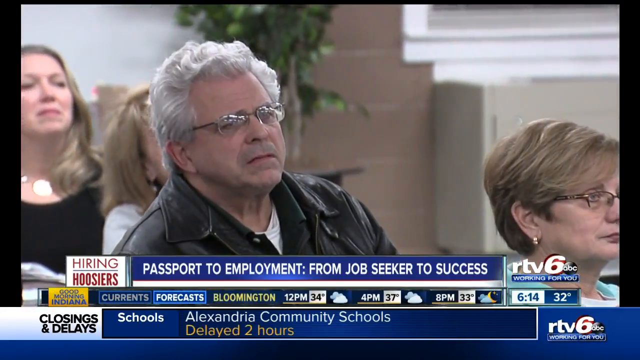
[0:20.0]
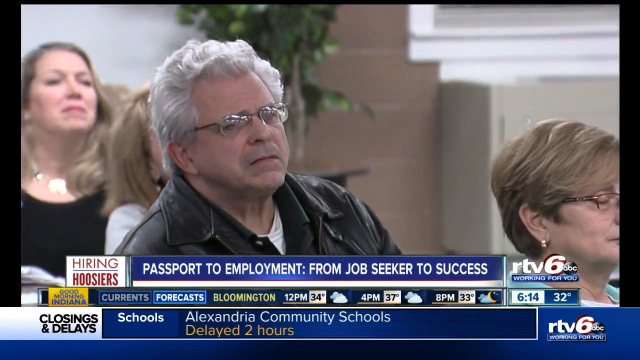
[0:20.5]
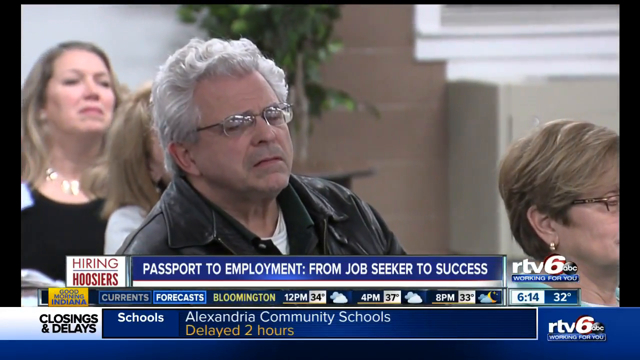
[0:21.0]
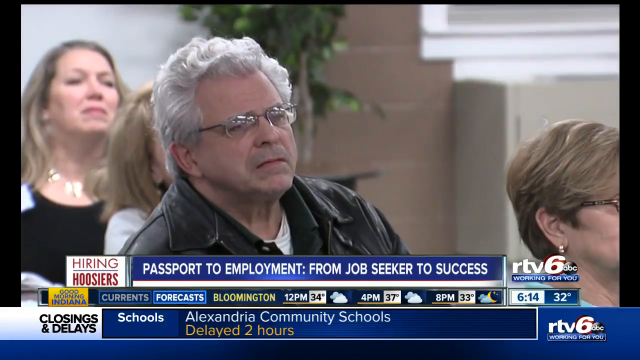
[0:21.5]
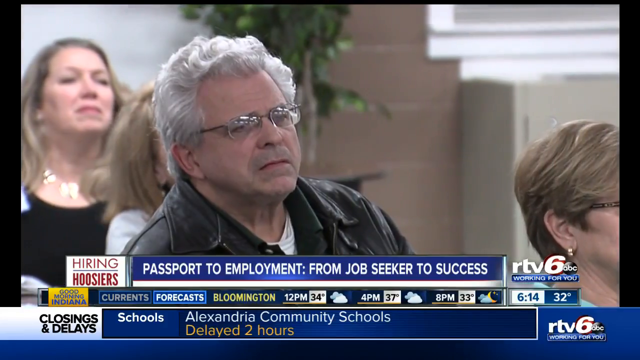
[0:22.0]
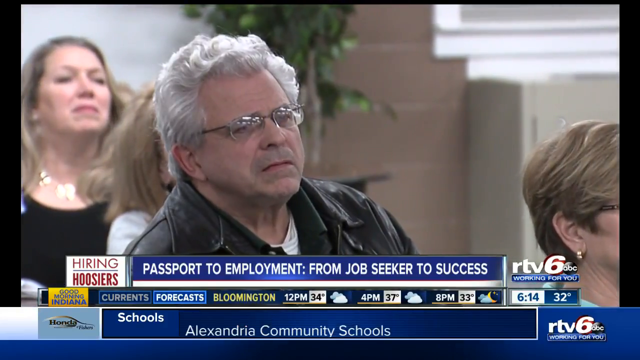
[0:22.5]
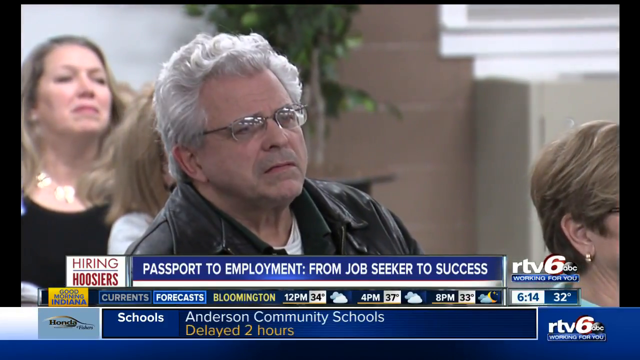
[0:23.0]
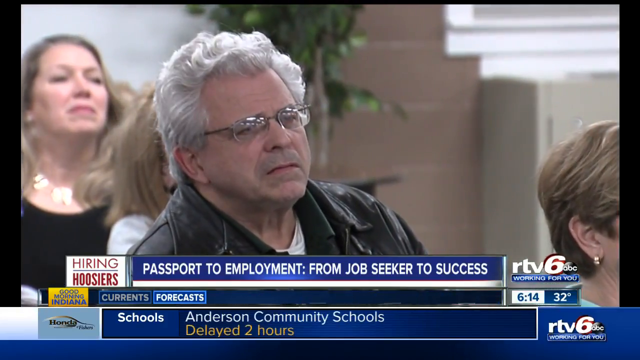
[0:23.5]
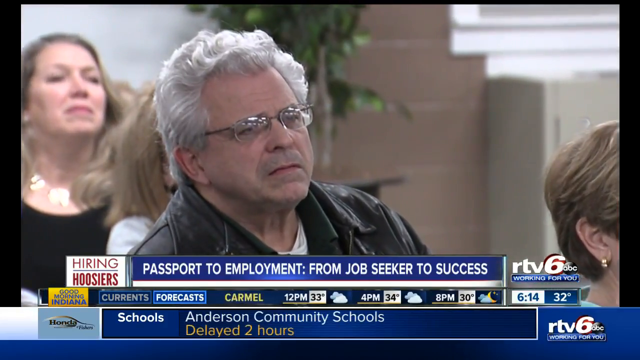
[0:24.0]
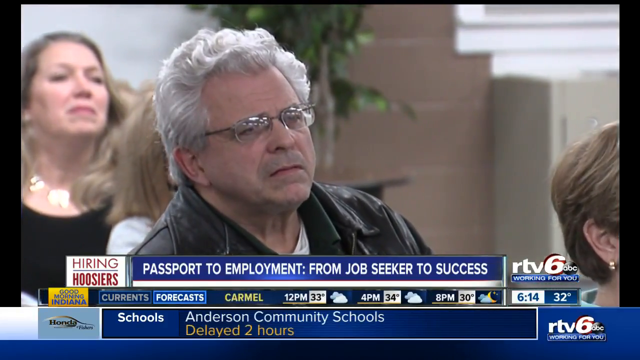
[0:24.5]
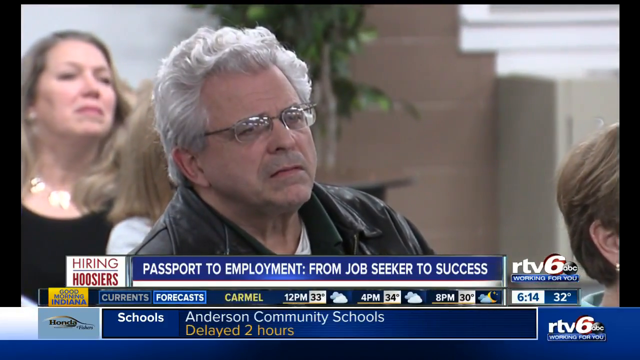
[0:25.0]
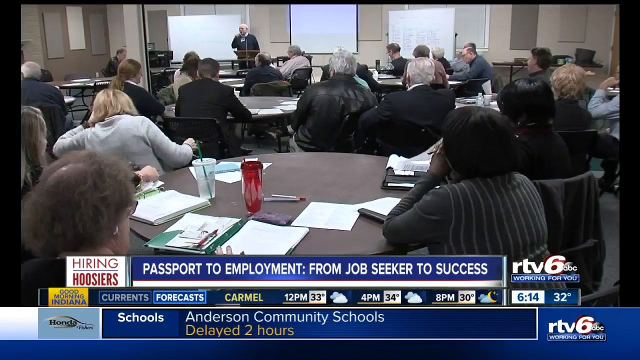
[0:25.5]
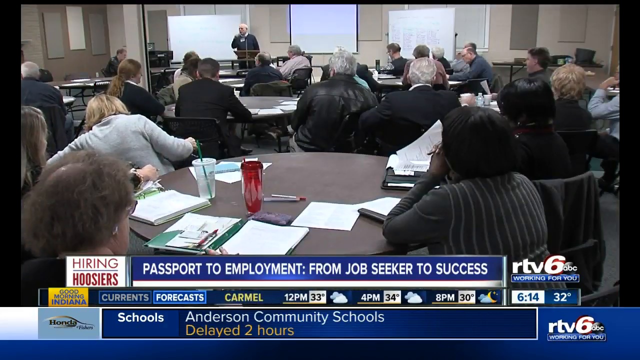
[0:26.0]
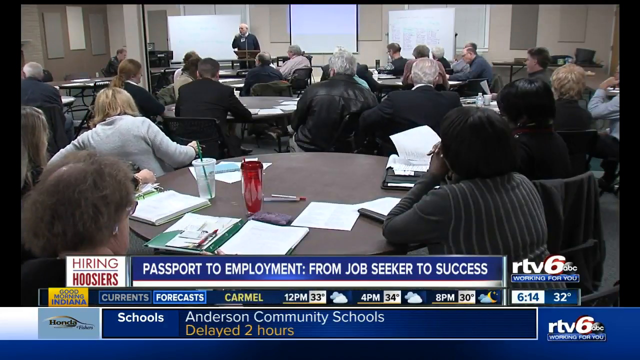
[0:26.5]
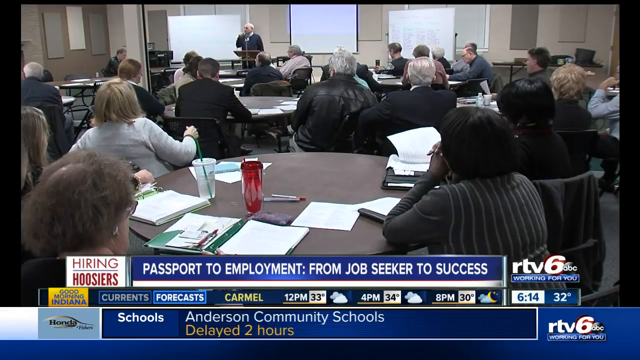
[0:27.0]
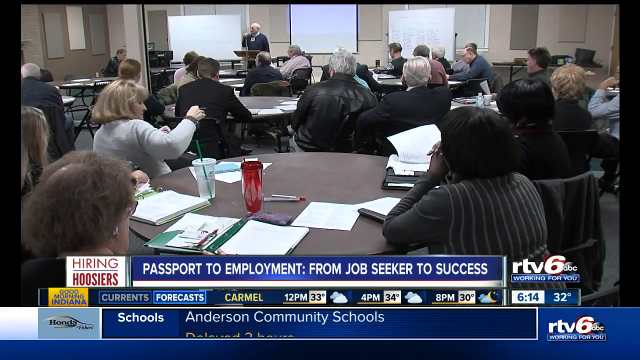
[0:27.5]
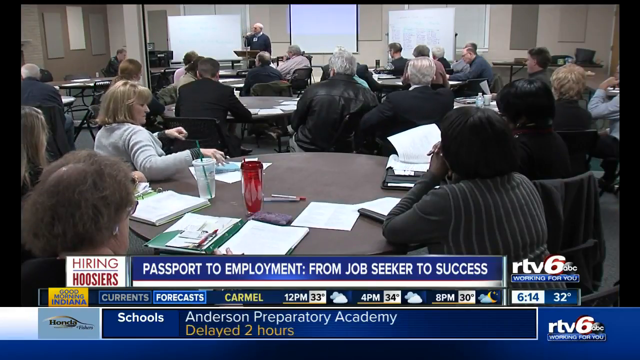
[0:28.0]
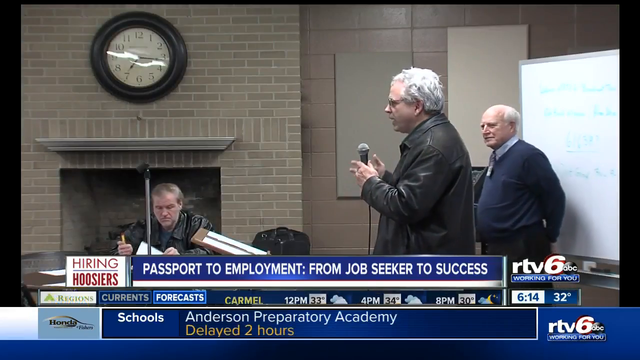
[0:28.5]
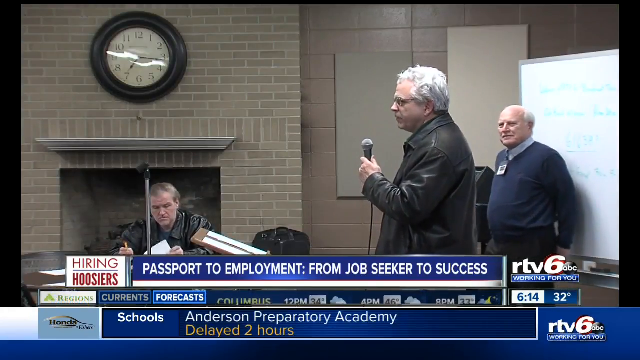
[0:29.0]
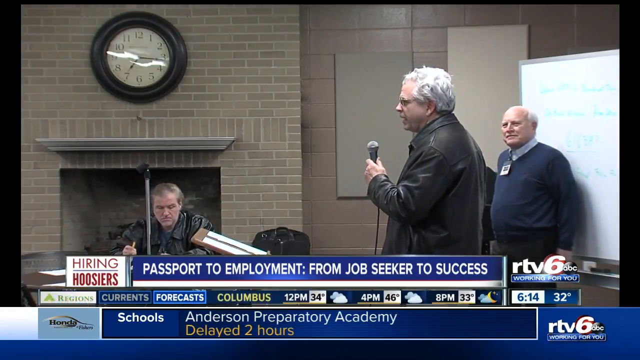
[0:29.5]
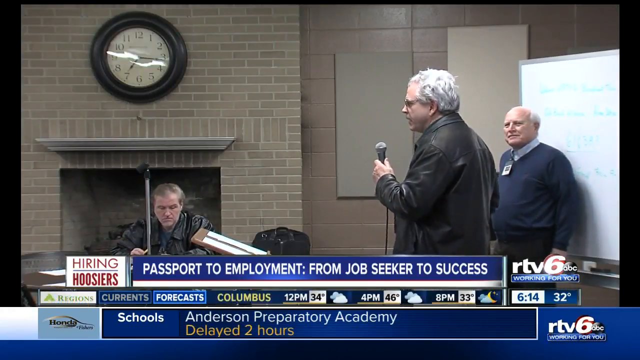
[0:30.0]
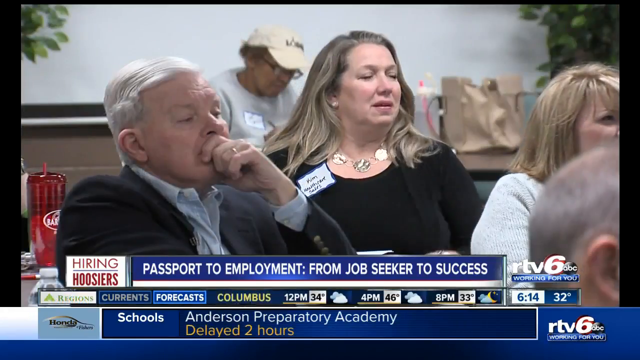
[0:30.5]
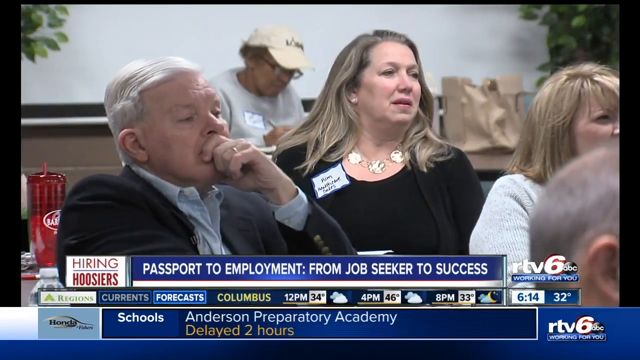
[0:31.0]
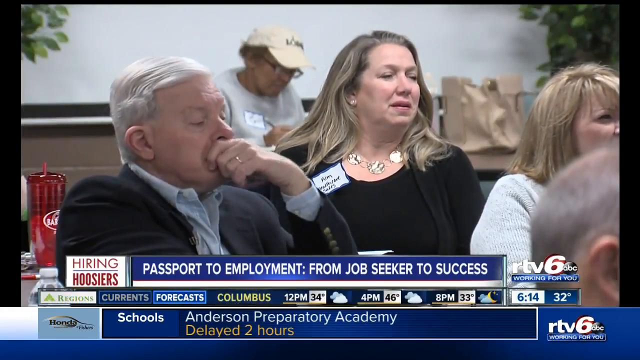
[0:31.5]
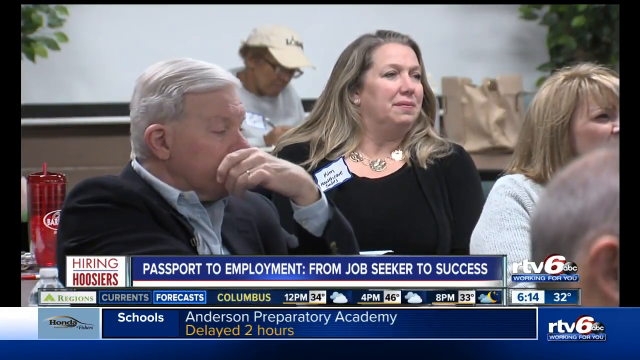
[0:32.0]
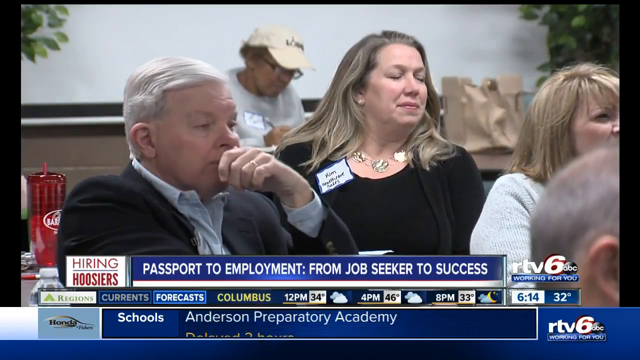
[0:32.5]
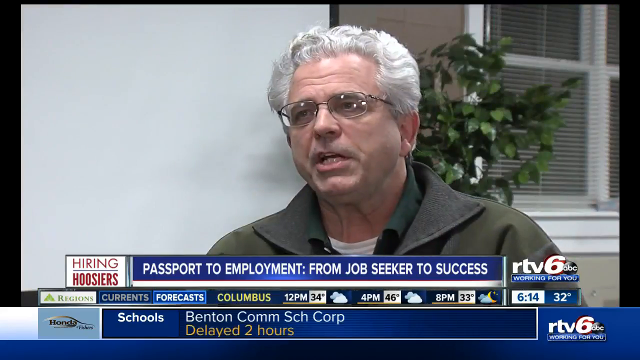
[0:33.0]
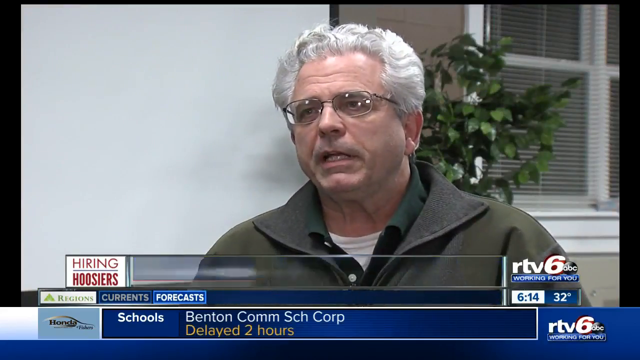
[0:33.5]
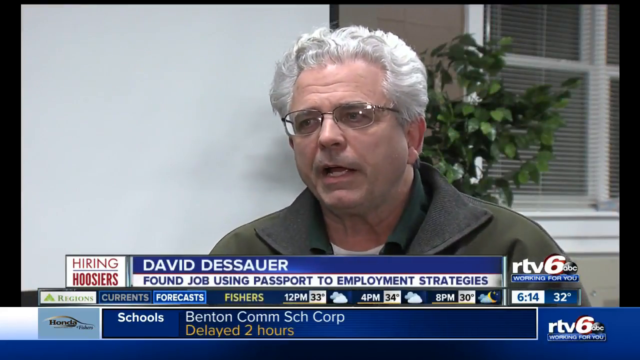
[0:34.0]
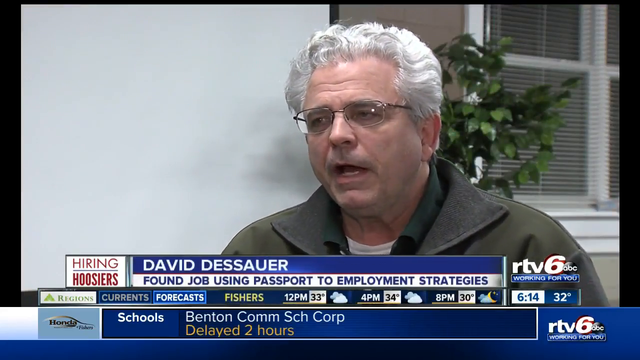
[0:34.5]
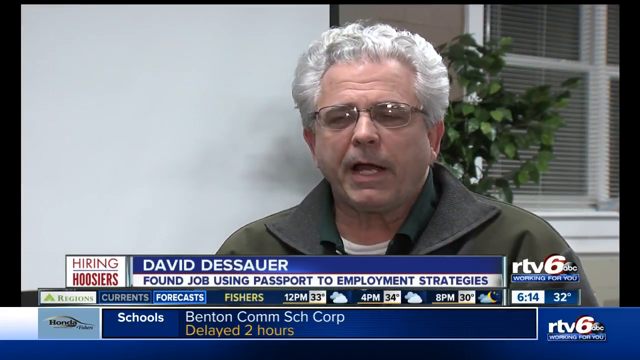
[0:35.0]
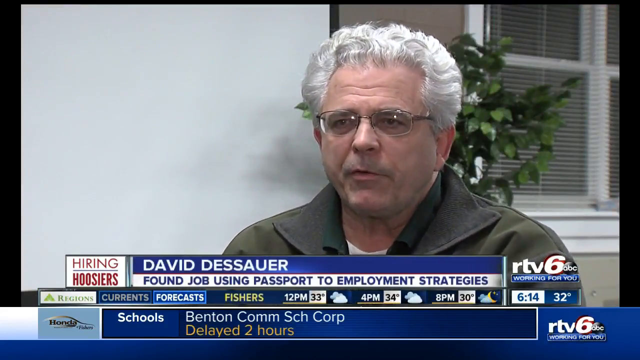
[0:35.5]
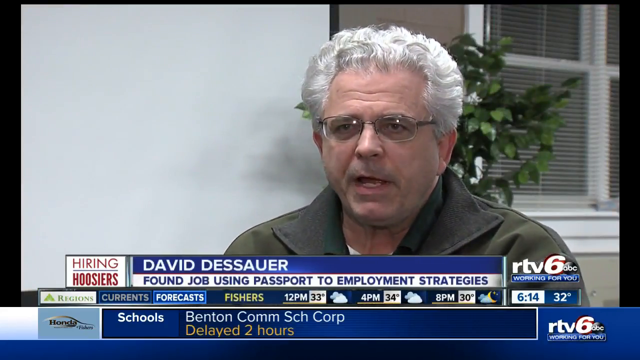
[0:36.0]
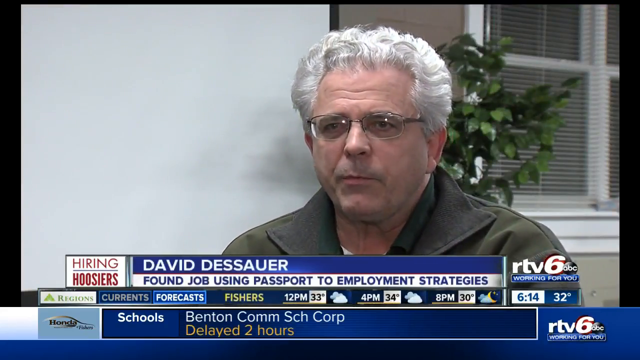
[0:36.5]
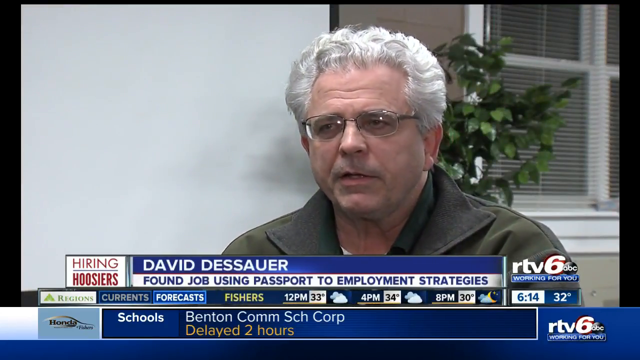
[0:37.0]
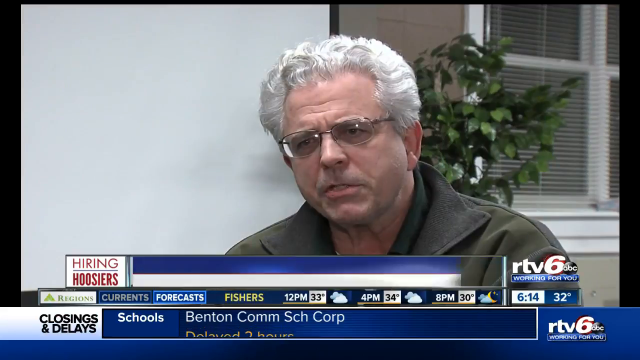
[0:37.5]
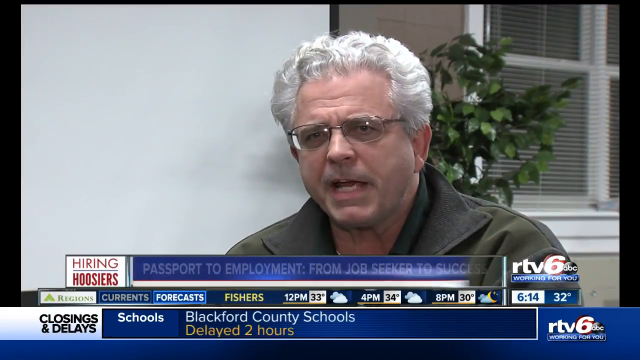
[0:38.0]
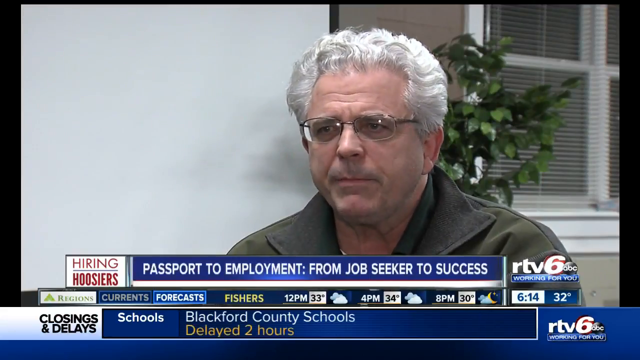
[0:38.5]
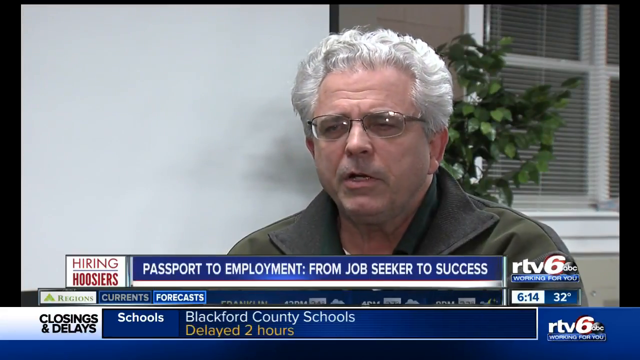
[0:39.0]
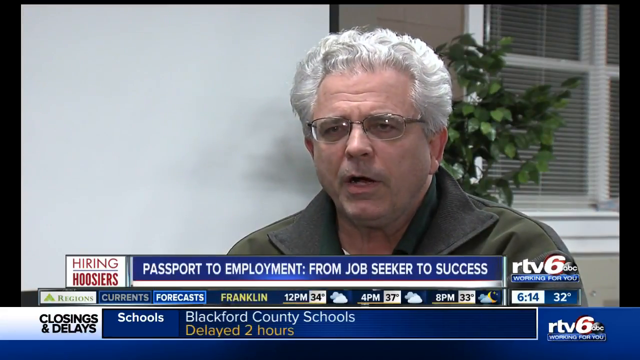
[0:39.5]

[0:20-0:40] A room that looks like a large, open conference room is filled with people listening intently, all looking toward the front. One man with white hair, glasses, a black leather coat and a black shirt looks overly anxious. A wider shot shows the big room, where people sit at round tables; the room looks pretty full, with young and old, men and women. The man in the leather jacket gets up and speaks. Beneath him, "Hiring Hoosiers" appears in bold red print, next to "David DeSauer" in bold white text on a blue background. Under that, on a white background, the text reads "found job using Passport to Employment Strategies". "RTV6" appears in the lower right-hand corner.